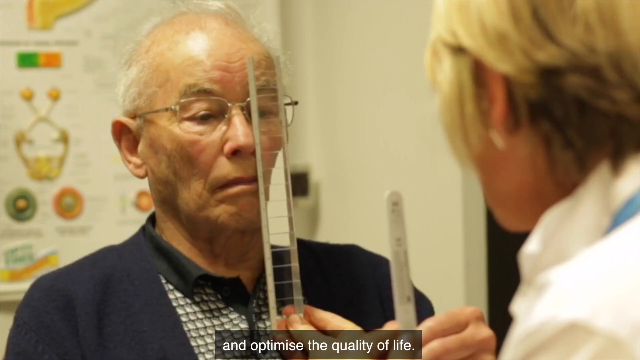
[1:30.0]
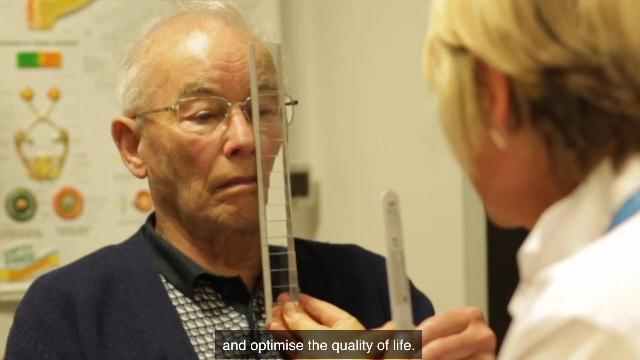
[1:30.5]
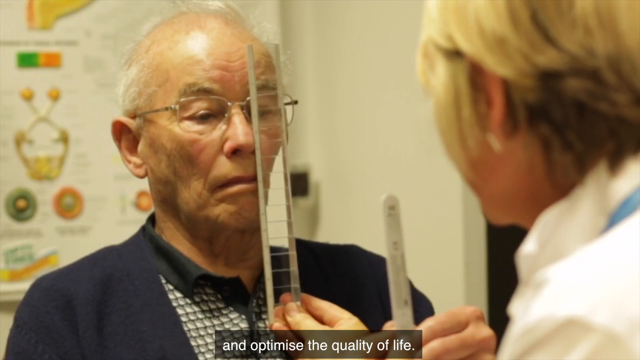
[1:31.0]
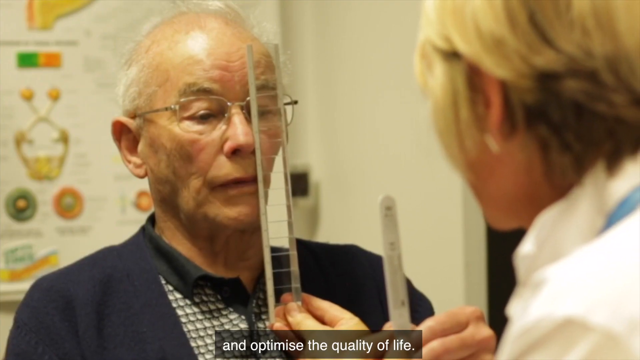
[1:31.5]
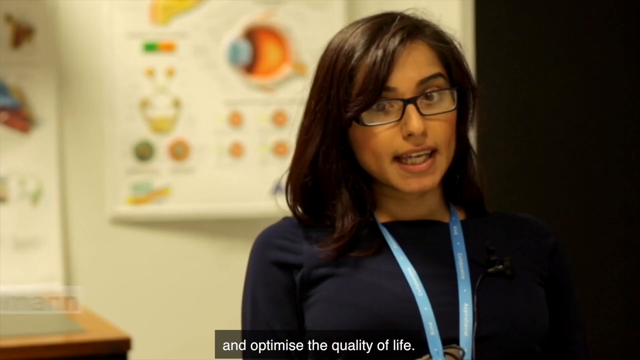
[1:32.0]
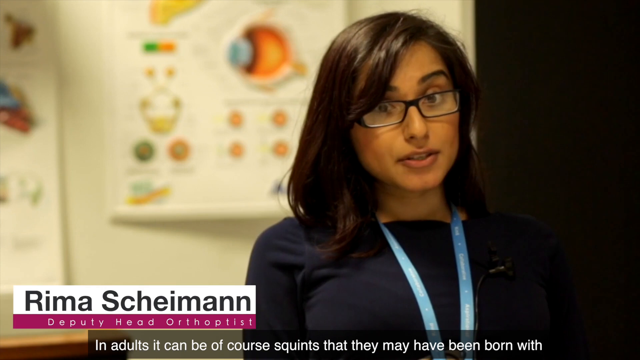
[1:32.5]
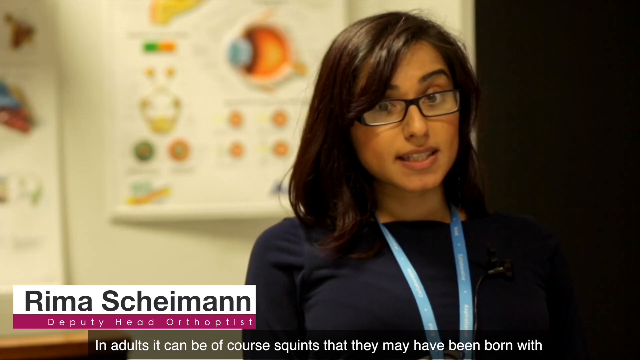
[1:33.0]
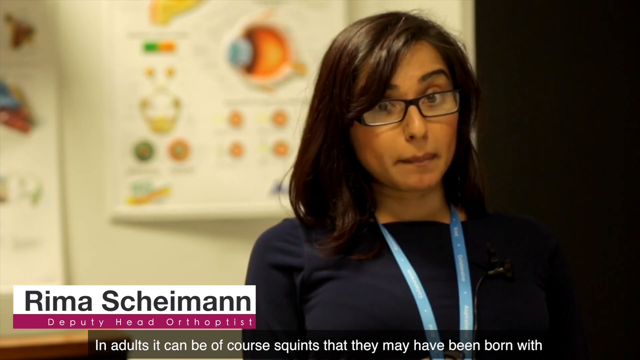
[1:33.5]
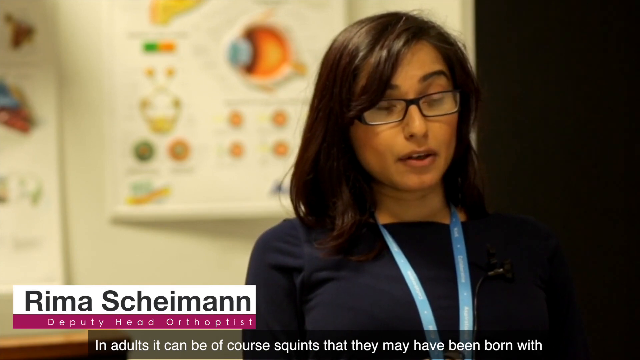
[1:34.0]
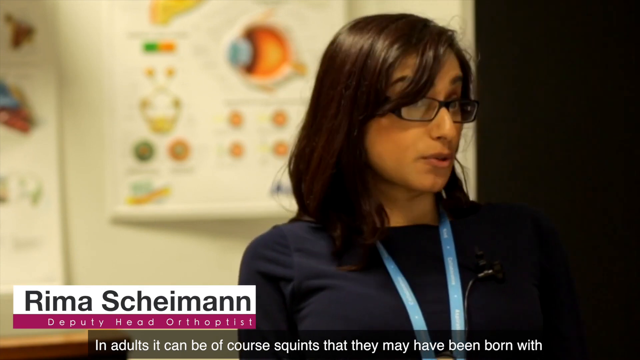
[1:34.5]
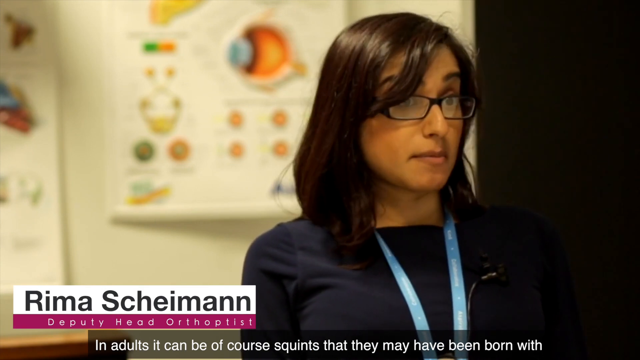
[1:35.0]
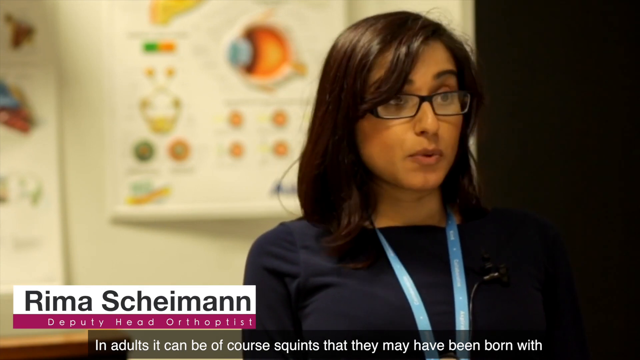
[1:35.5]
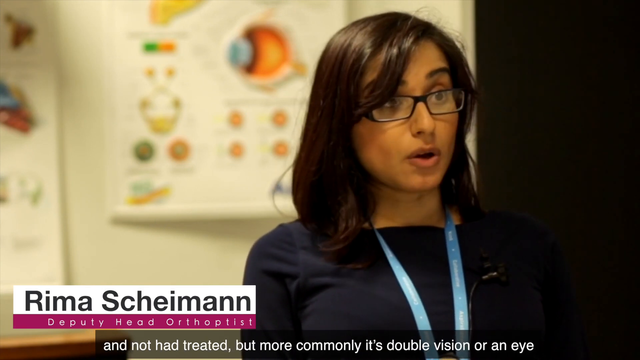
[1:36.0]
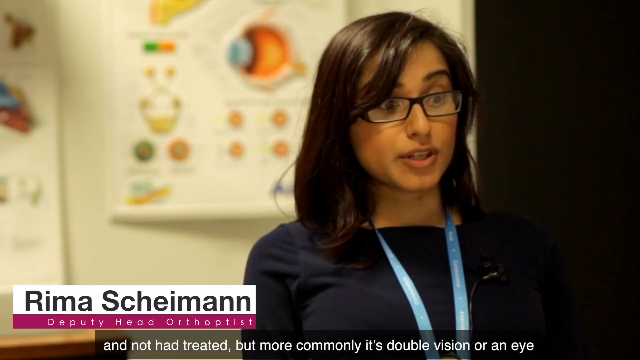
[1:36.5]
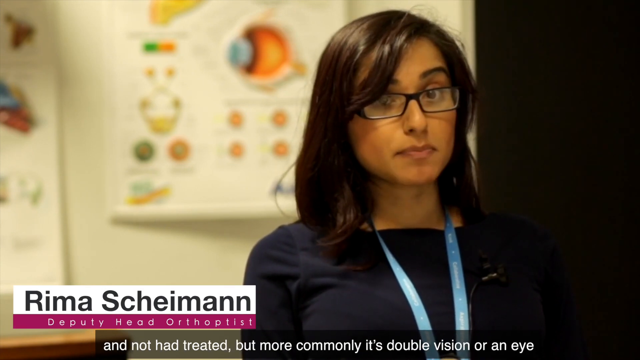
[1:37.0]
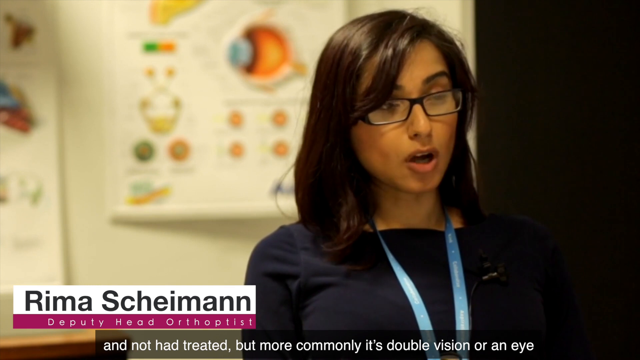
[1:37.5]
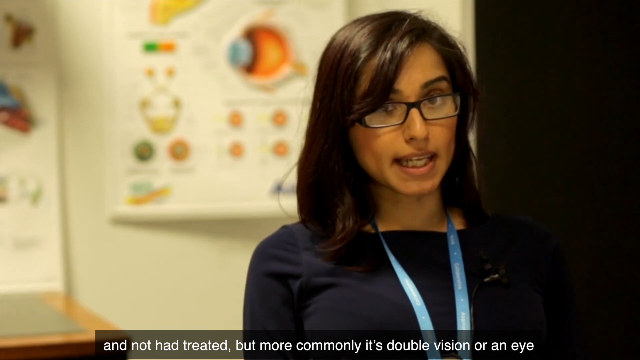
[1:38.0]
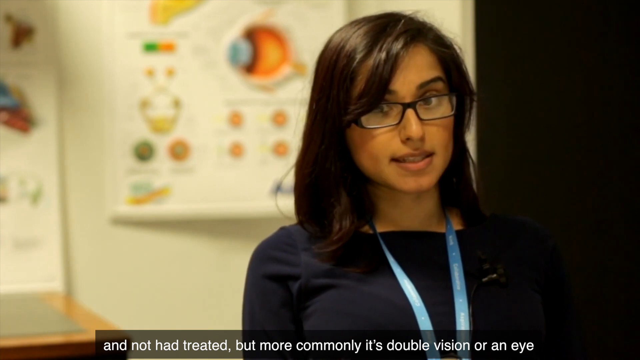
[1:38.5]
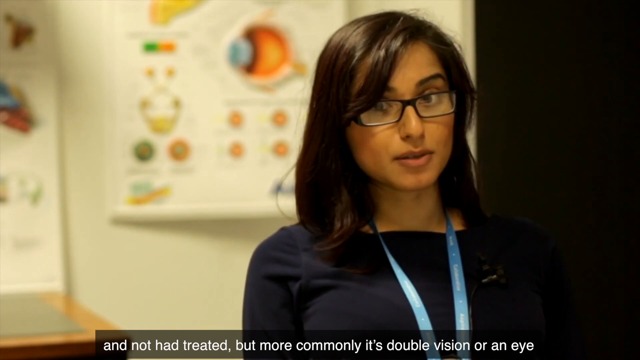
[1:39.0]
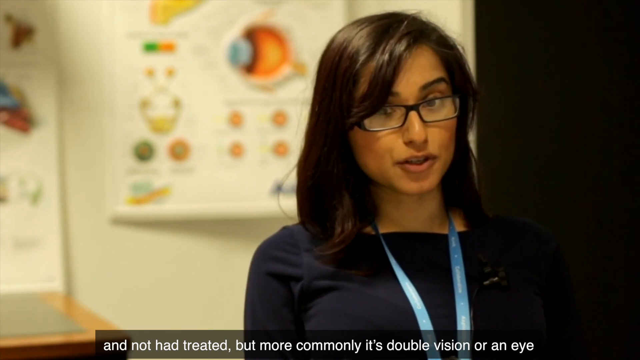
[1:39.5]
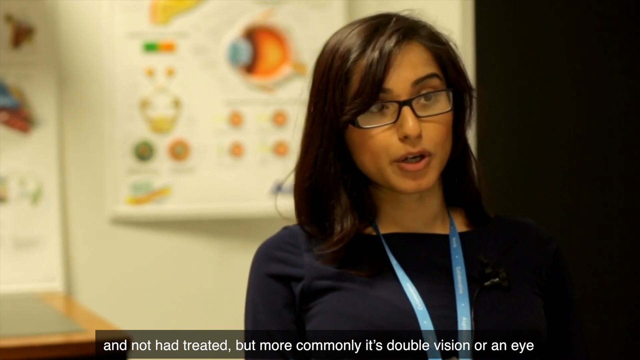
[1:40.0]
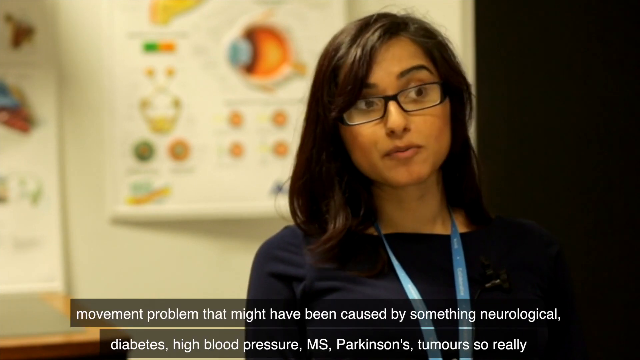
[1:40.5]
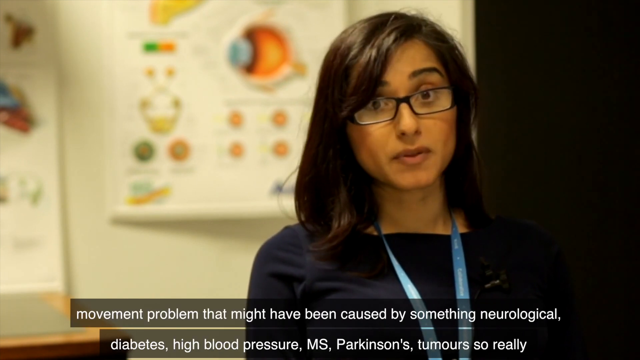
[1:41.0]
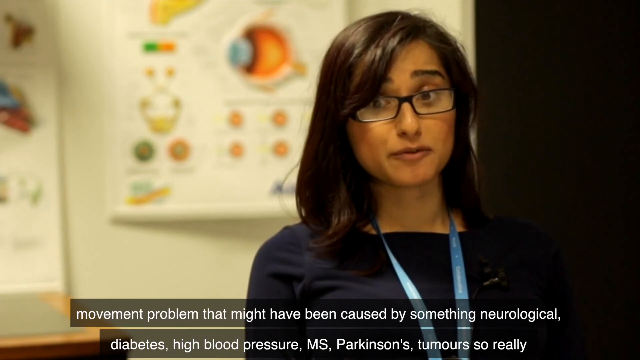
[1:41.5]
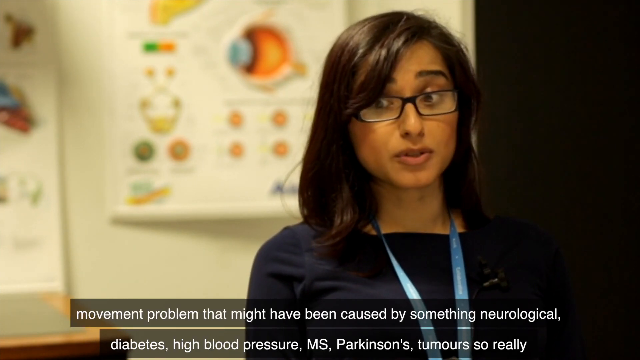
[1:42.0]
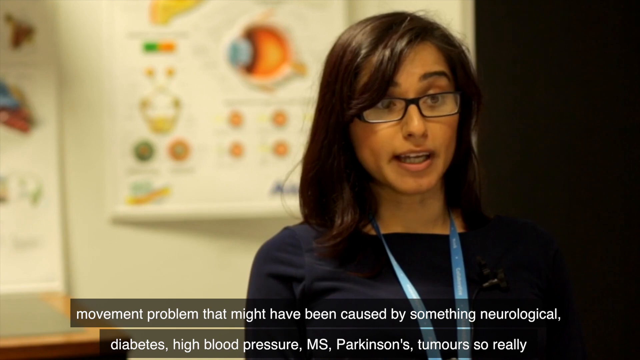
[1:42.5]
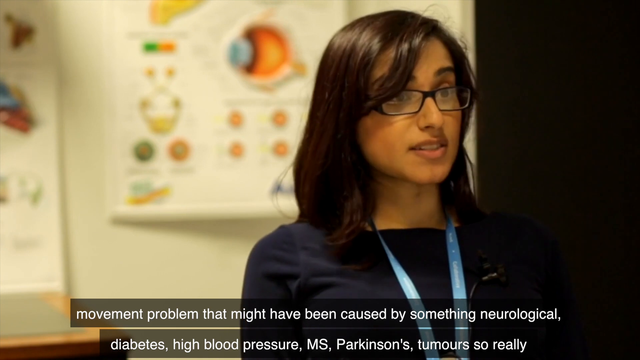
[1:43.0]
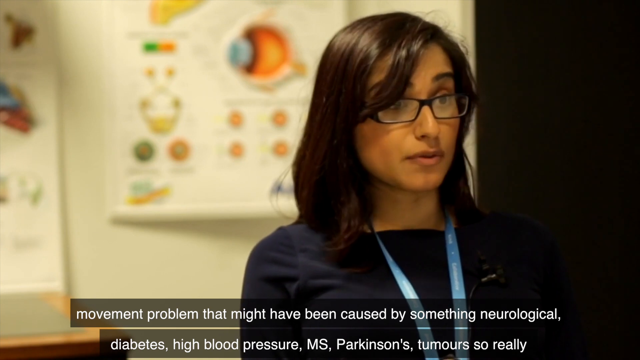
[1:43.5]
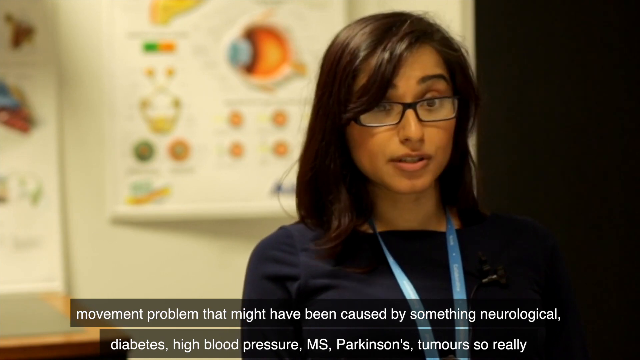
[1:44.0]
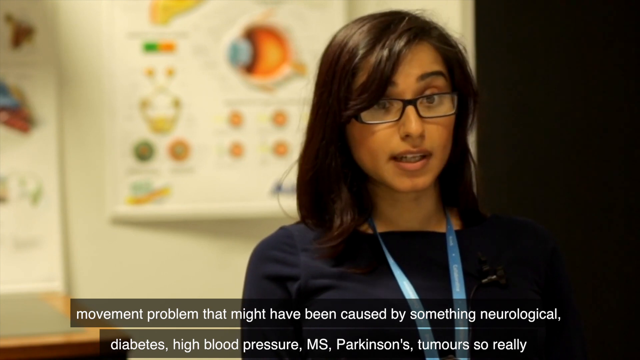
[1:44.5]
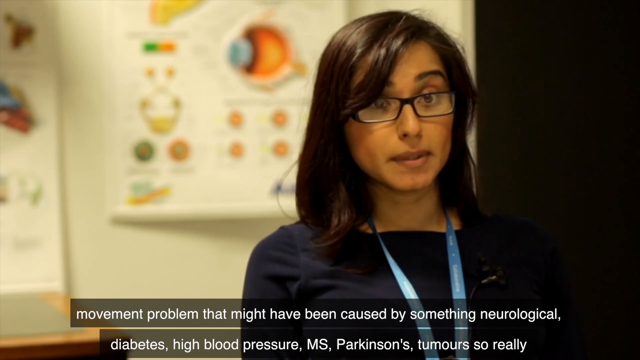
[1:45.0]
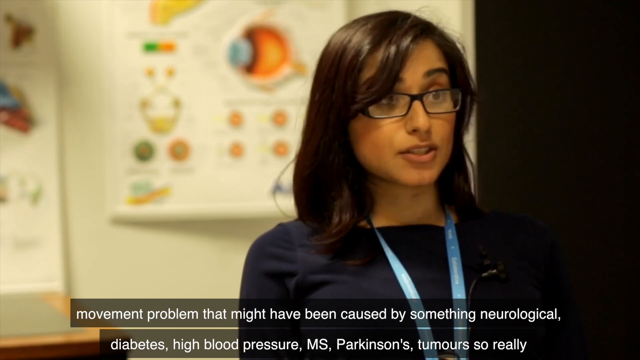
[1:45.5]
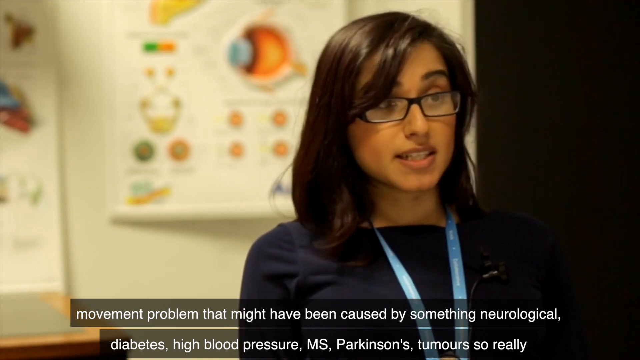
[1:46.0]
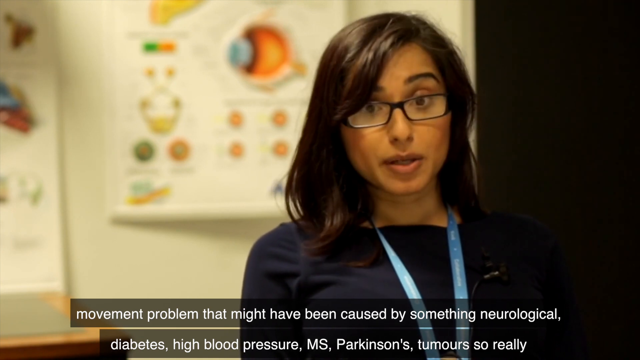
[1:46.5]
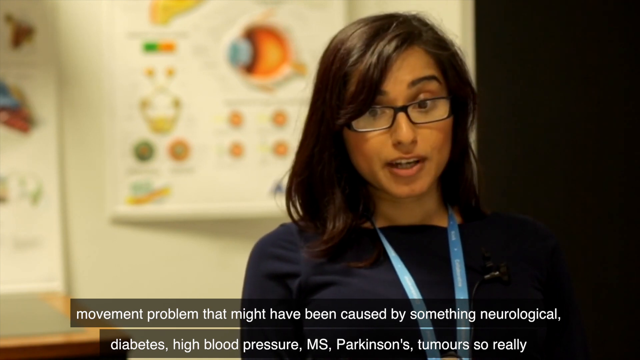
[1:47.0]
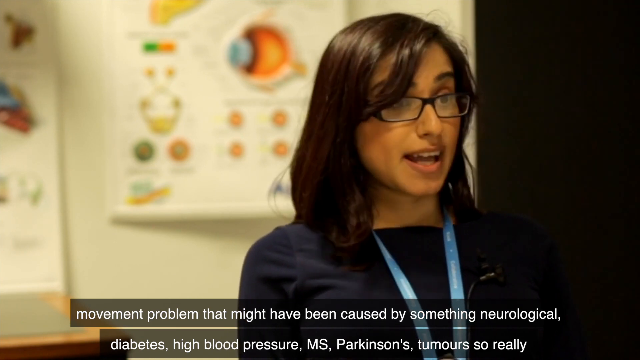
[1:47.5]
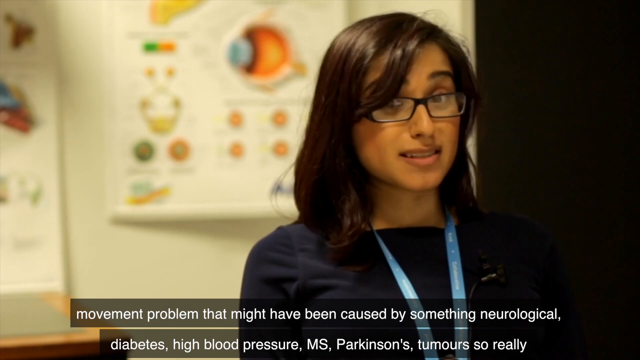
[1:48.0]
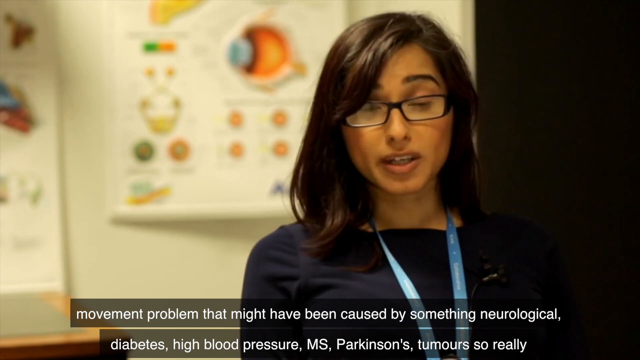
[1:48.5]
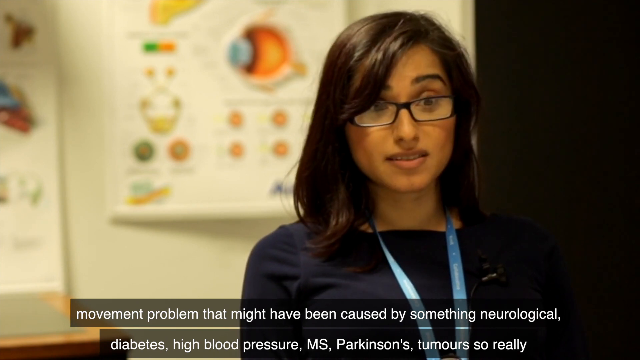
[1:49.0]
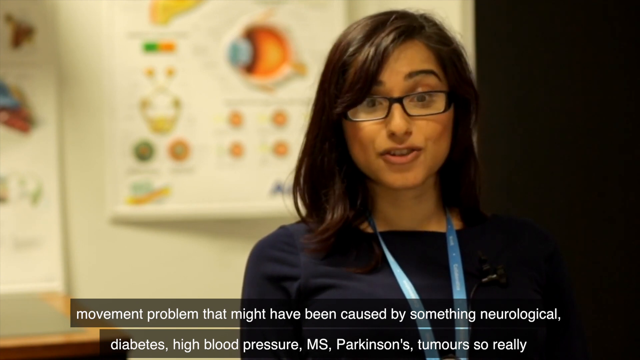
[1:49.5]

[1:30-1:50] The dark-haired female doctor is talking again, still in the office with the eye chart behind her and the dark door. The camera kind of pans back to the doctor with short blonde hair working with the elderly man. She holds an object that looks like a small ladder in front of his face; it has different little compartments that are apparently different kinds of lenses. He has his glasses on, and she holds it over his left eye as he looks through it. The video then returns to the doctor with long dark hair, who is speaking.